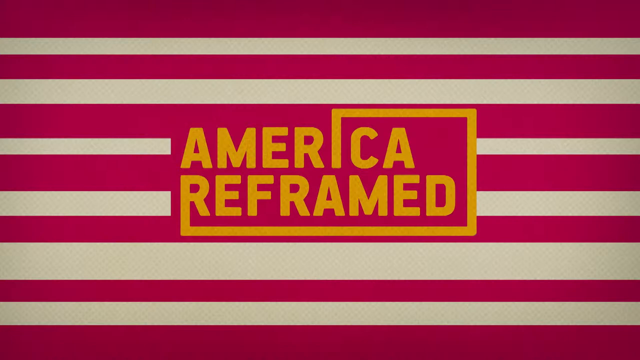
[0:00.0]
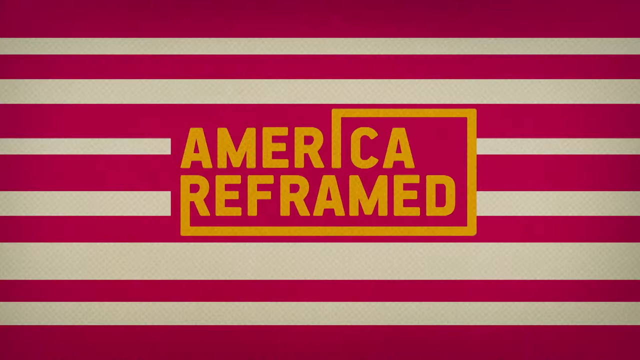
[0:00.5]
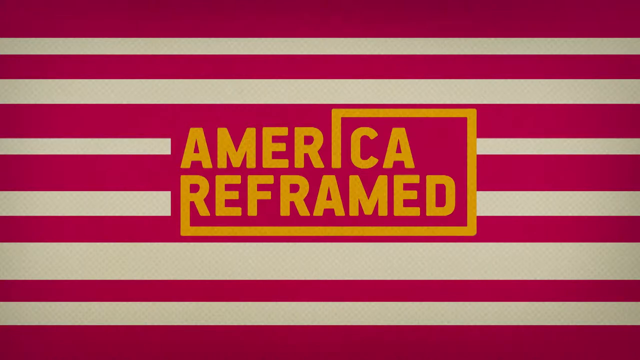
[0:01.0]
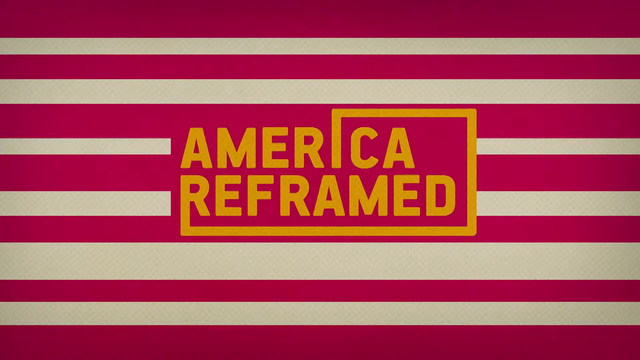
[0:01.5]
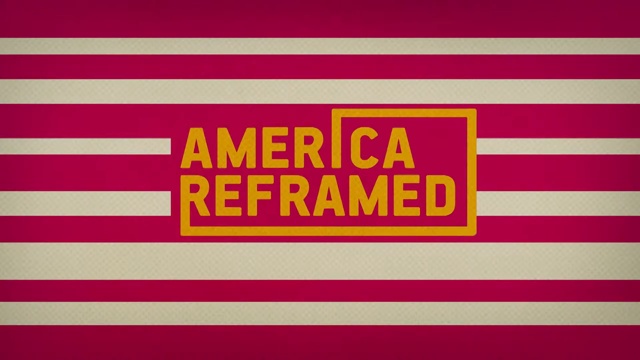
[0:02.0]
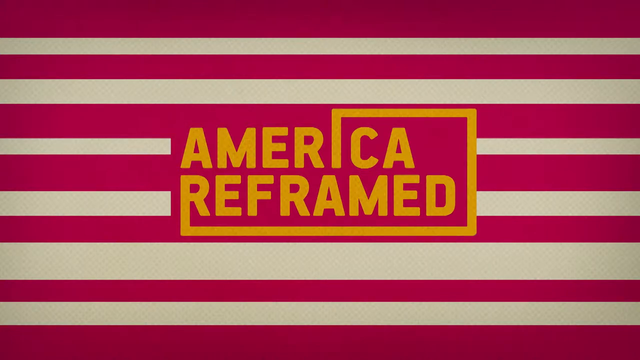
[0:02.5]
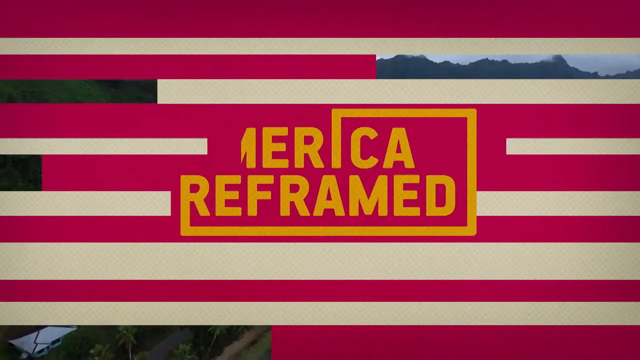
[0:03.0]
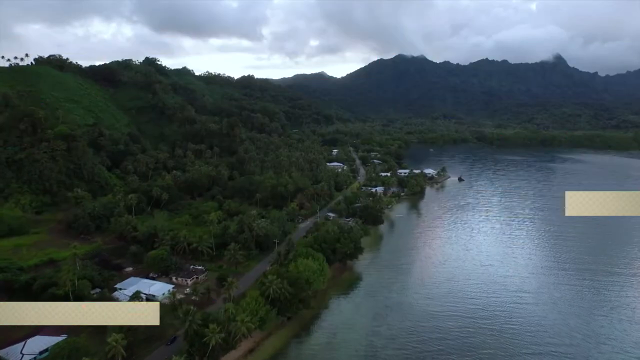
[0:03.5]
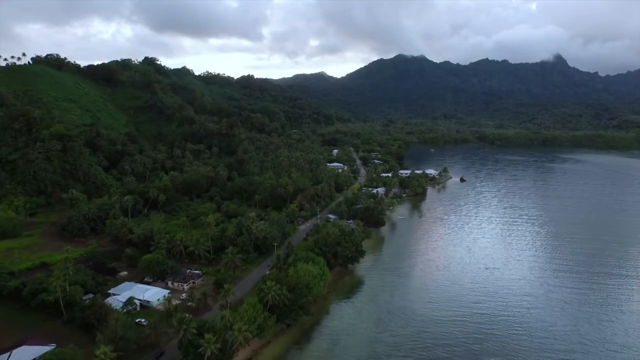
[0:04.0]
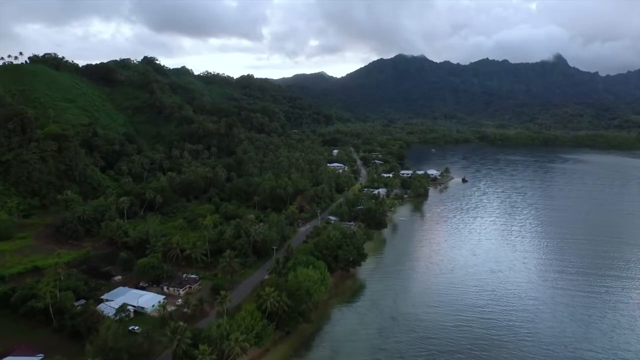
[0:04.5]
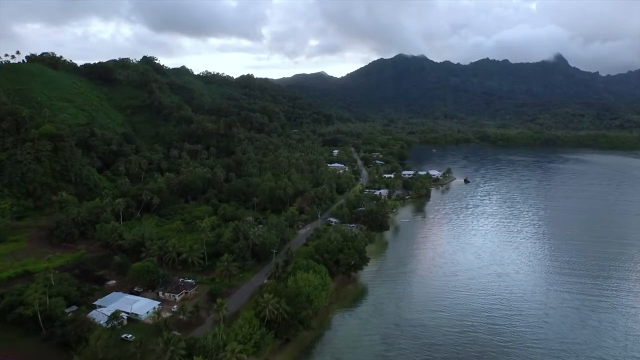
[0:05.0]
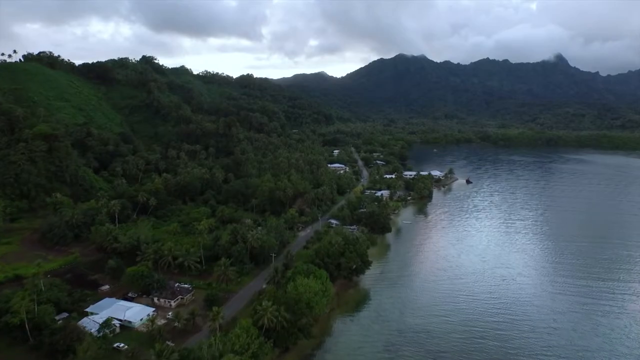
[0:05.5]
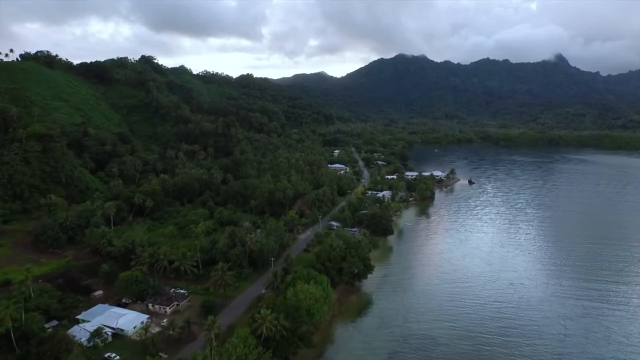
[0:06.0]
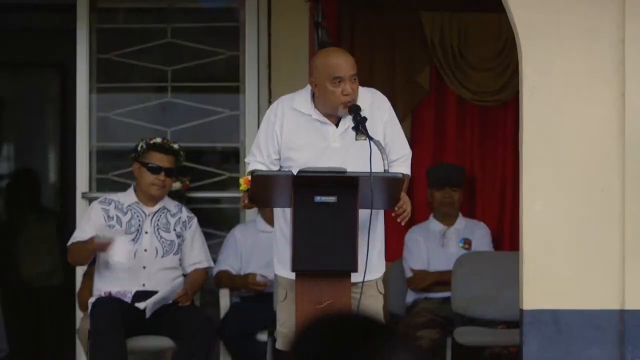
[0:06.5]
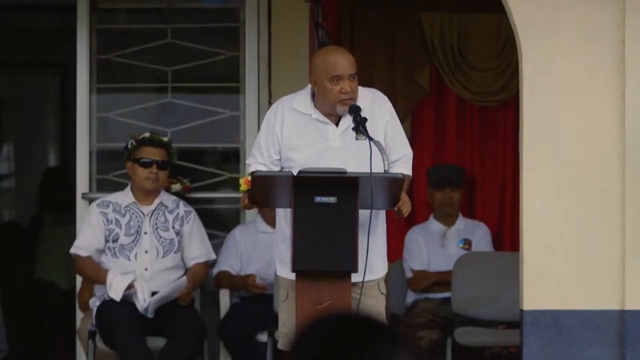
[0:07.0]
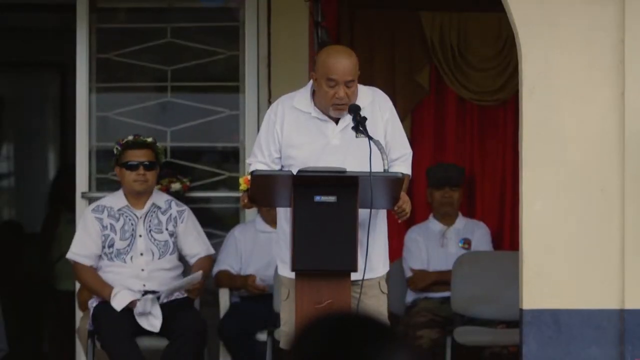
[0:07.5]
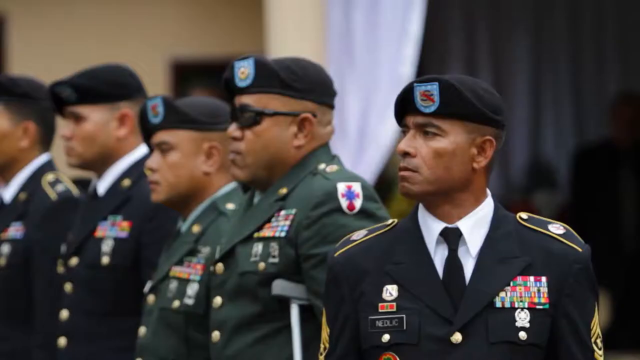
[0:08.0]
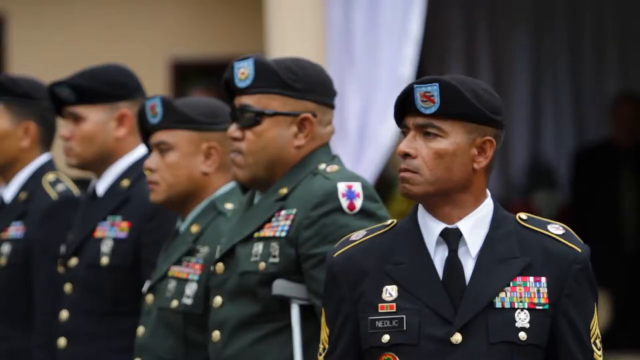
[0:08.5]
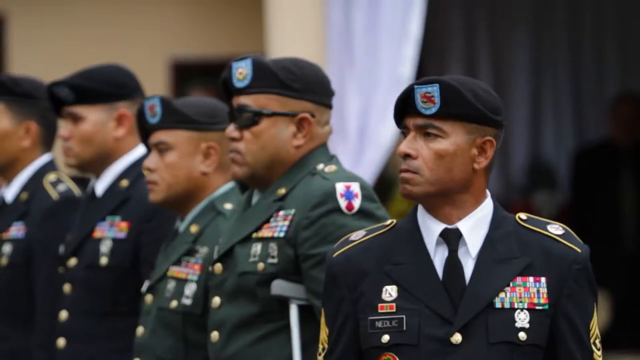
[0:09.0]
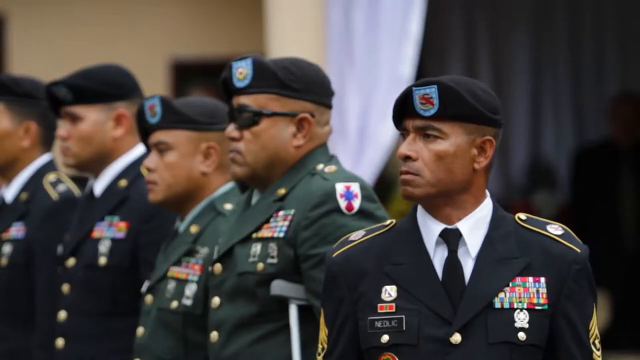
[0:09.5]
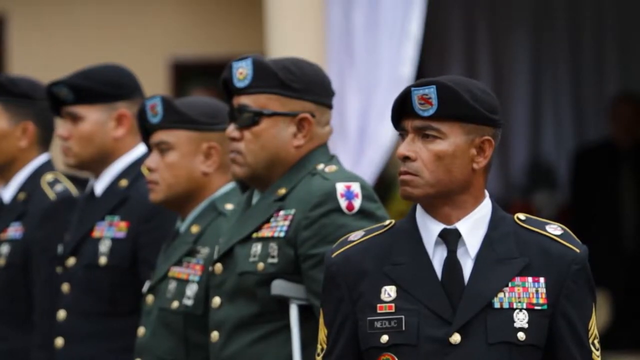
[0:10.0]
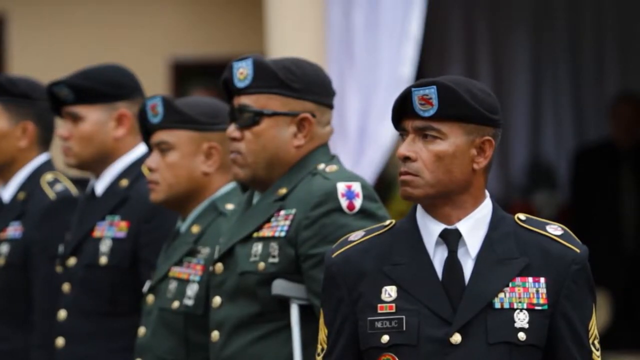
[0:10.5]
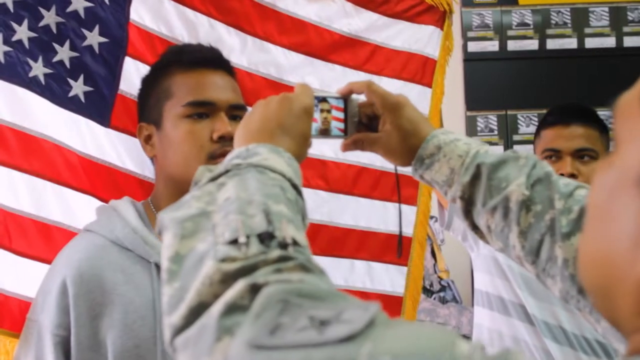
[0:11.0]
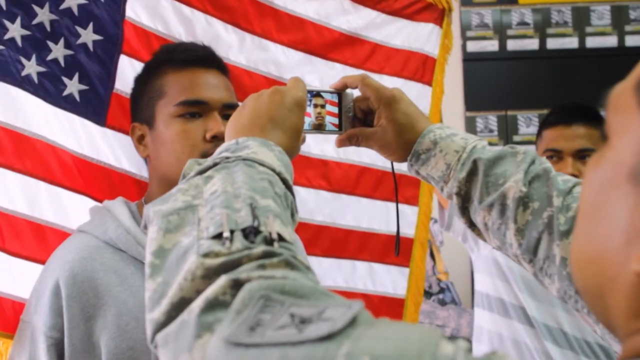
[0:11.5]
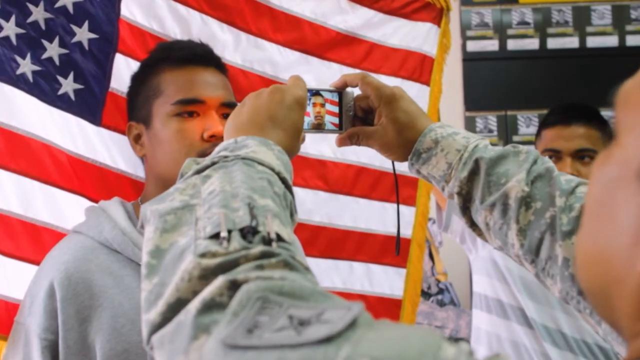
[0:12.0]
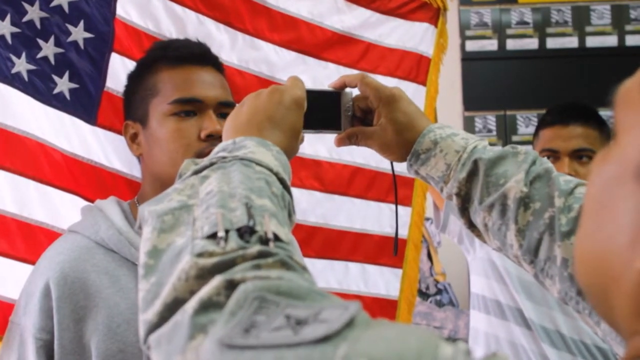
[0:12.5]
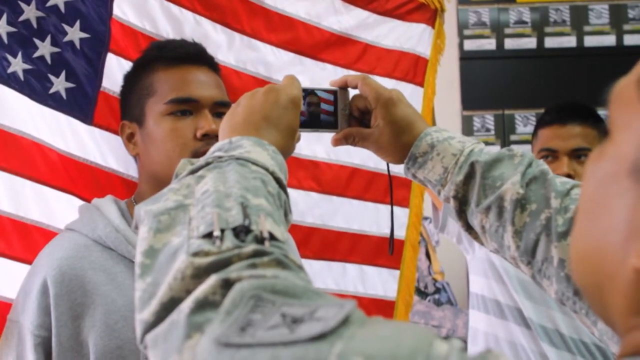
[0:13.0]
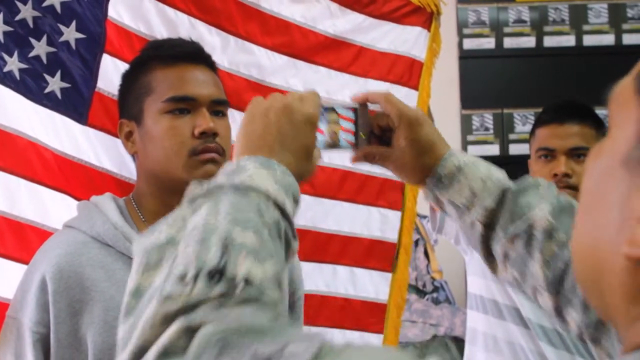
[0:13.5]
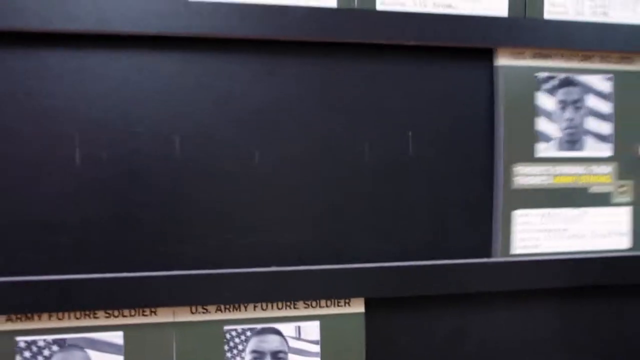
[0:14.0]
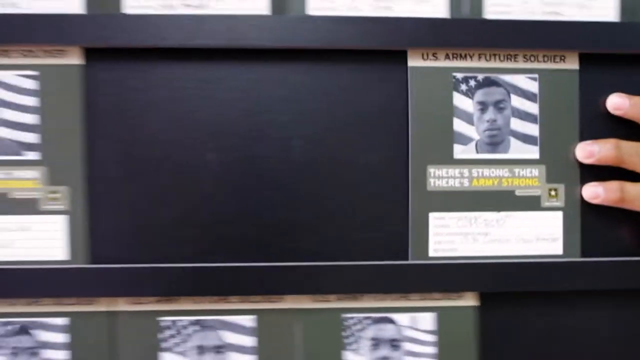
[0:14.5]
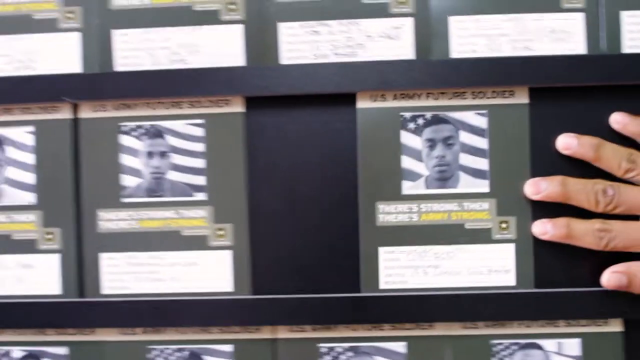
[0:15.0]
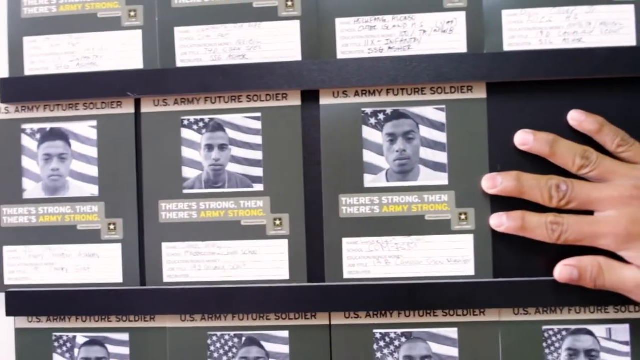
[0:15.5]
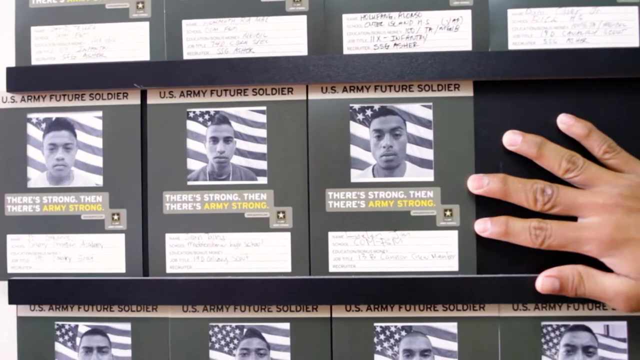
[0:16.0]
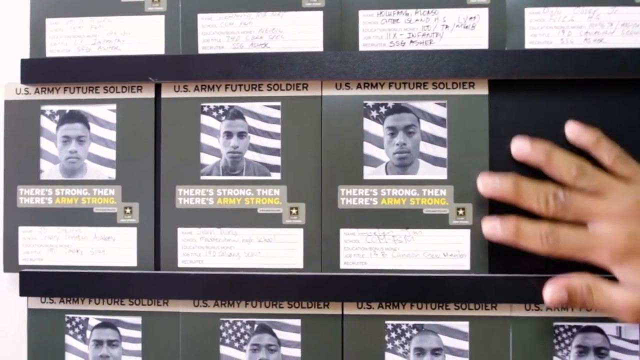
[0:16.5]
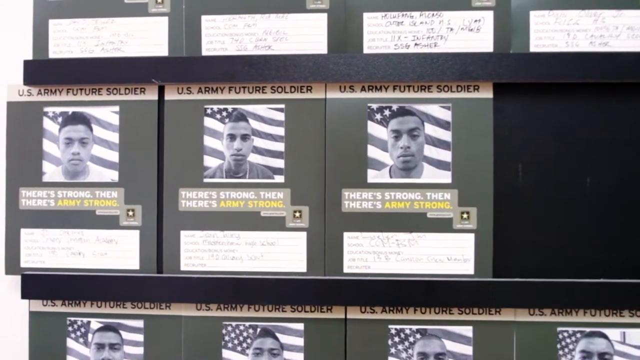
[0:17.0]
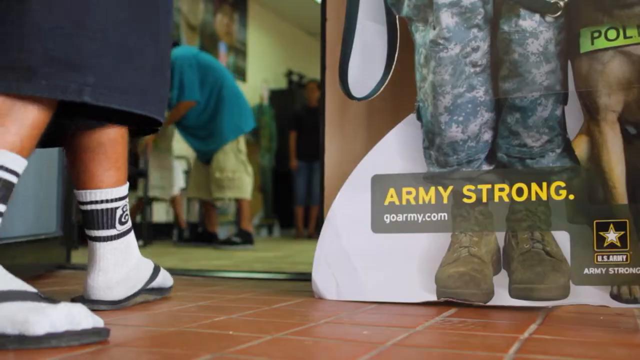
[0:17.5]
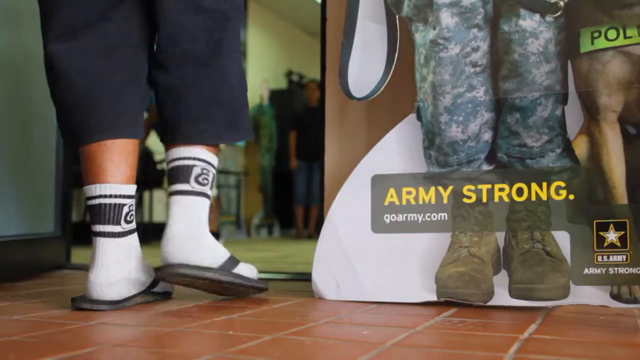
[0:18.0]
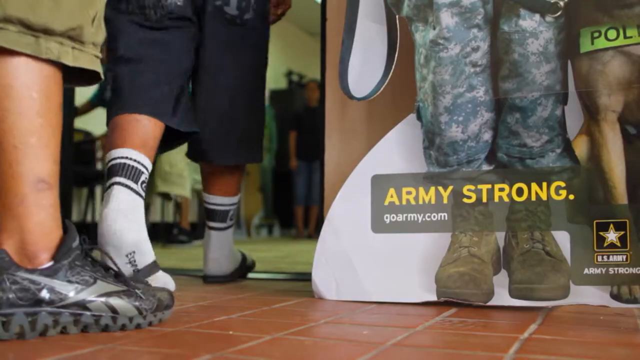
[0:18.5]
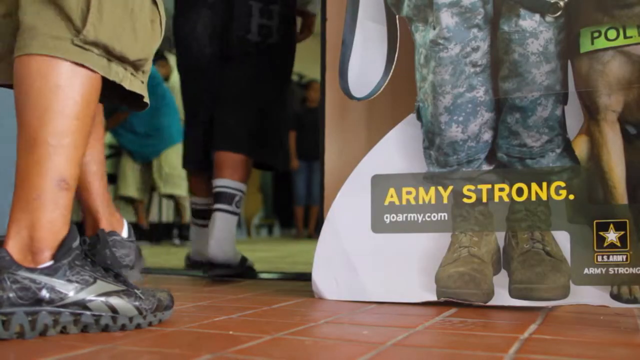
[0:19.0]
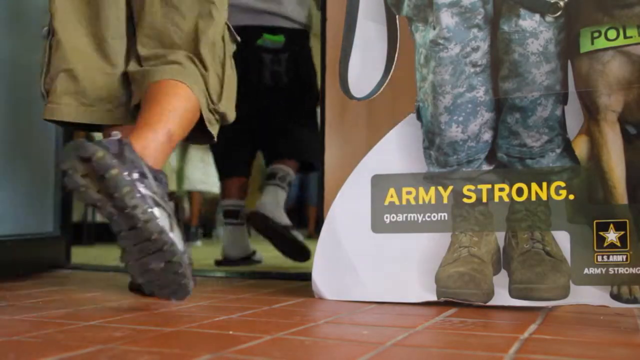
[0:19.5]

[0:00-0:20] The video opens on horizontal stripes alternating red and beige across the screen. In a rectangular frame in the middle, mustard-colored text on a red background reads "America reframed." After a few seconds this disappears to reveal mountains surrounding a body of water; the water looks calm, like a lake, with gentle ripples and reflections on the surface. Next, a man in a white shirt stands on the porch of a house with an arched doorway and a beige wall. He stands behind a podium and speaks into a microphone, and three other people dressed in white shirts are seated behind him. A group of men in different military uniforms then stand side by side, wearing black berets with blue crests. They wear black dress military uniforms, with two of the five men in green military uniforms, and there are medals on their uniforms. The men seem to be listening. Next, a man stands with his back to an American flag while someone wearing military camouflage takes his photograph. Photographs of people are then arranged, with "U.S. Army Future Soldier" written across the top of the three photographs in view, and a person's hand slides the photos into place. The feet of a person in white socks and black pants appear beside a poster with "Army Strong" written on it in yellow.